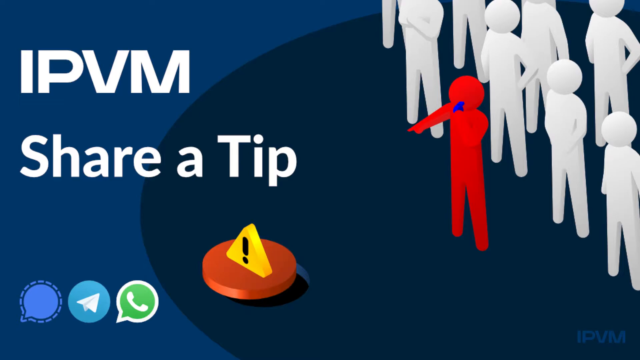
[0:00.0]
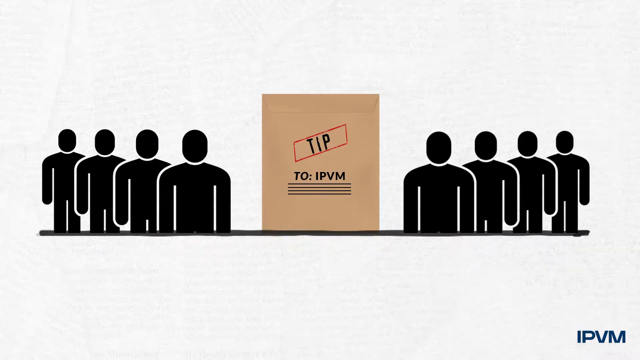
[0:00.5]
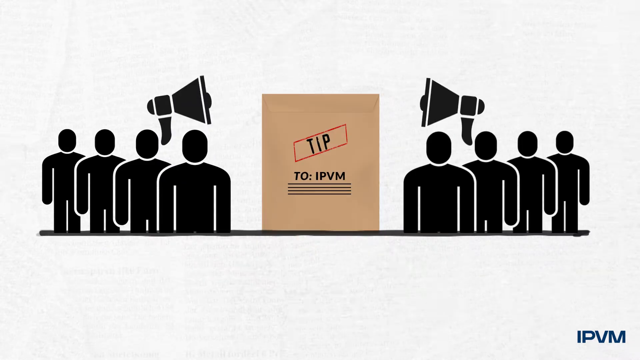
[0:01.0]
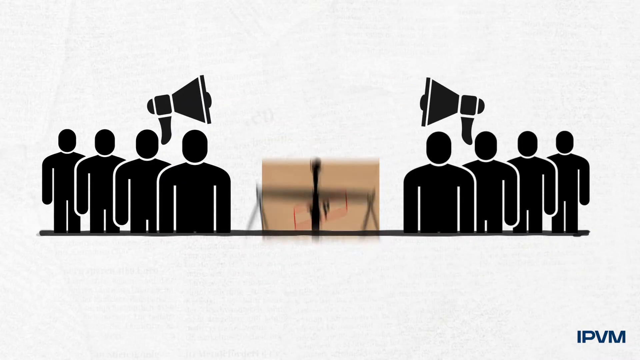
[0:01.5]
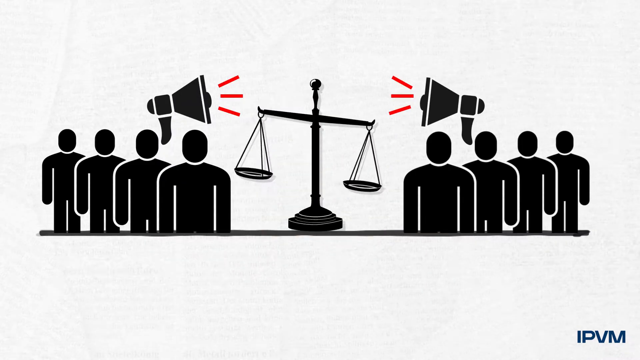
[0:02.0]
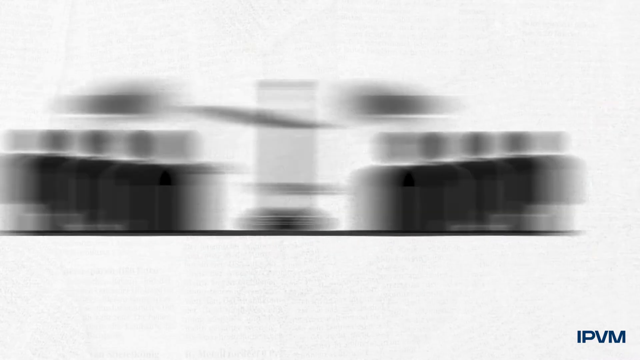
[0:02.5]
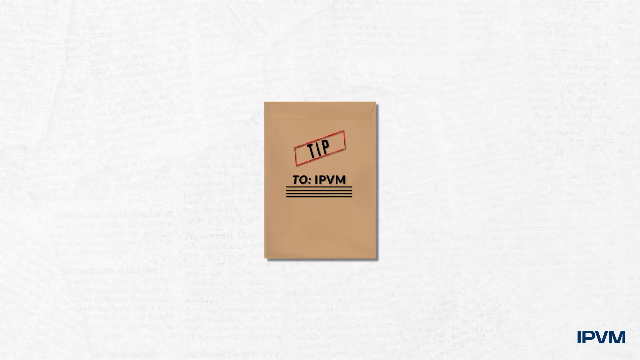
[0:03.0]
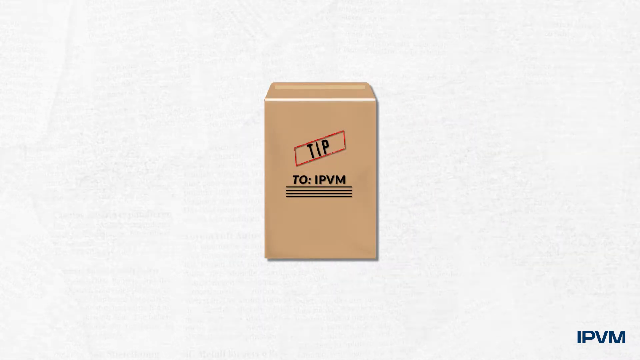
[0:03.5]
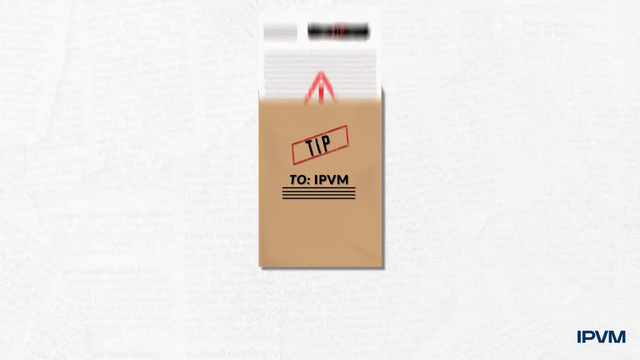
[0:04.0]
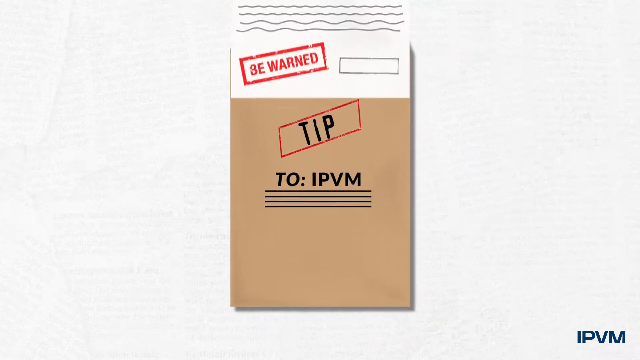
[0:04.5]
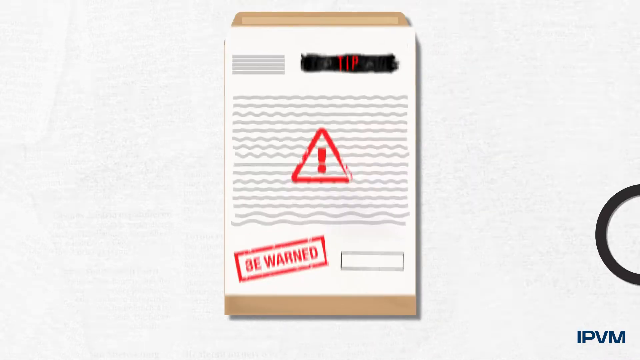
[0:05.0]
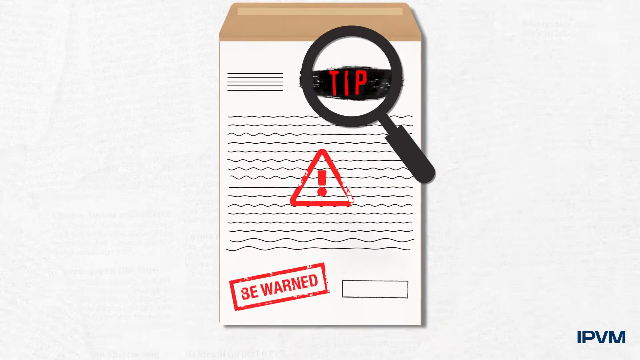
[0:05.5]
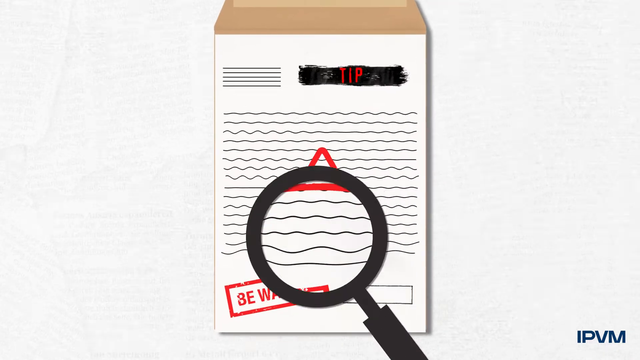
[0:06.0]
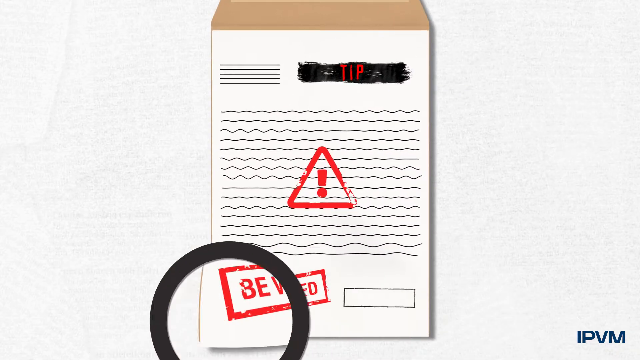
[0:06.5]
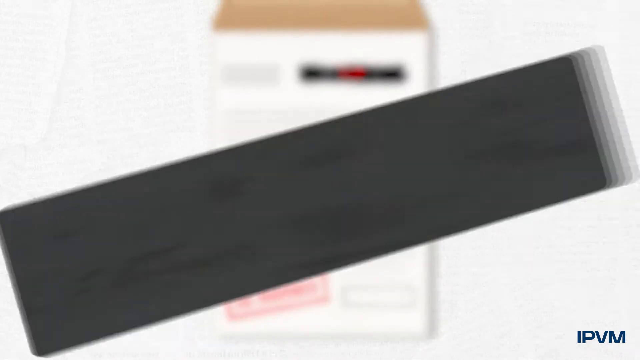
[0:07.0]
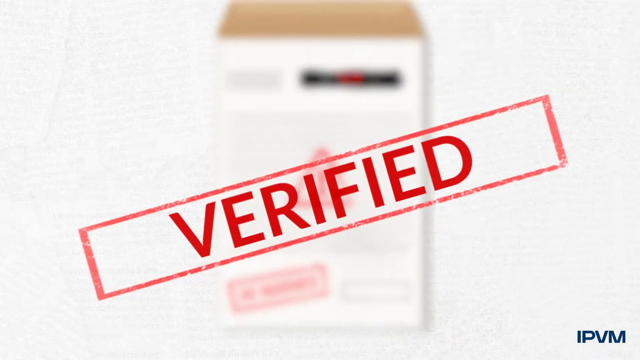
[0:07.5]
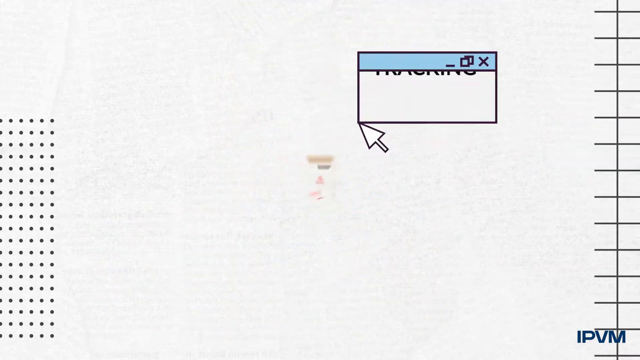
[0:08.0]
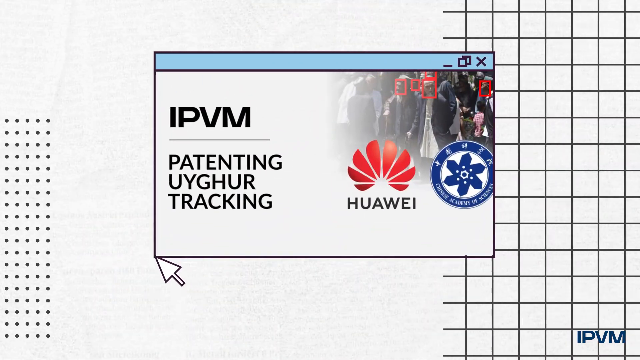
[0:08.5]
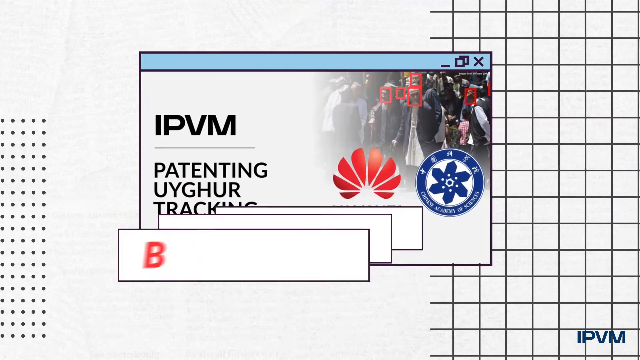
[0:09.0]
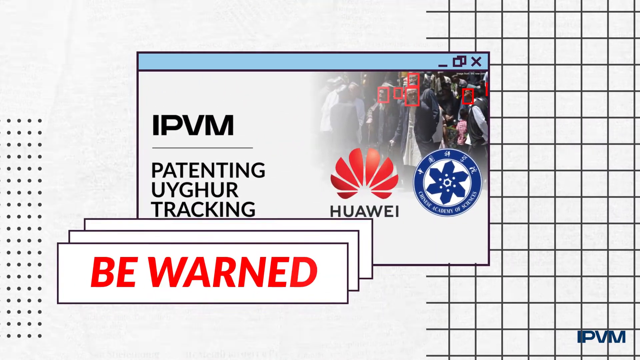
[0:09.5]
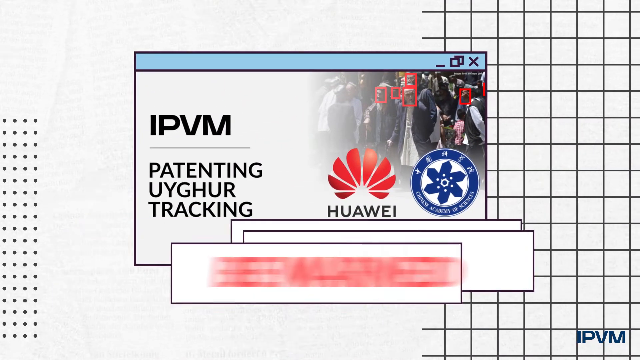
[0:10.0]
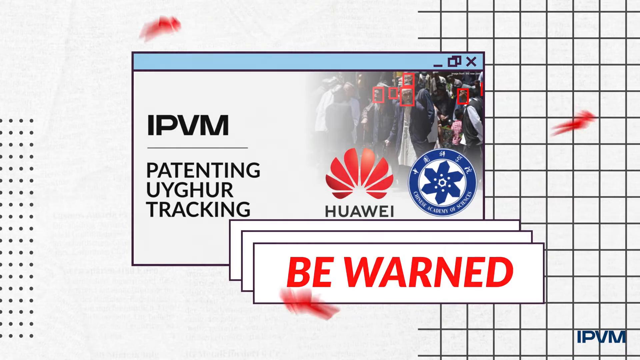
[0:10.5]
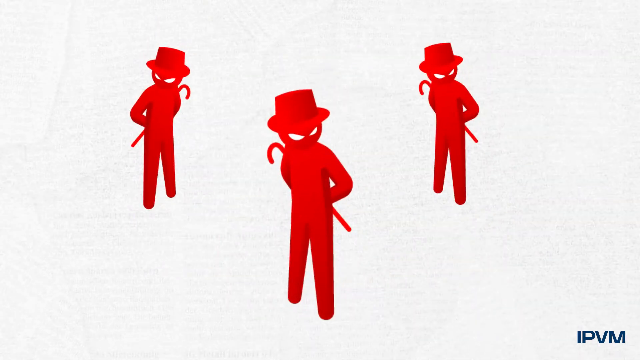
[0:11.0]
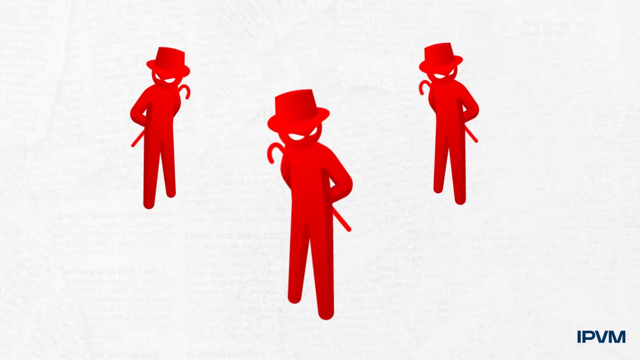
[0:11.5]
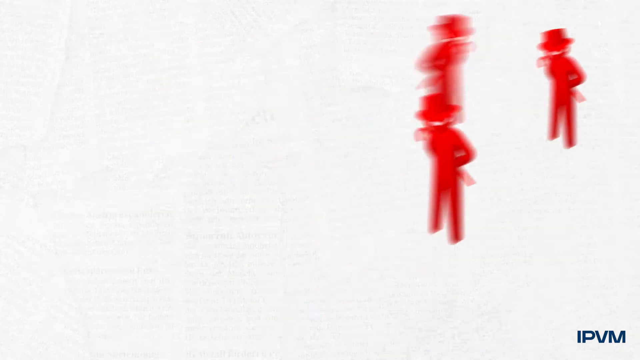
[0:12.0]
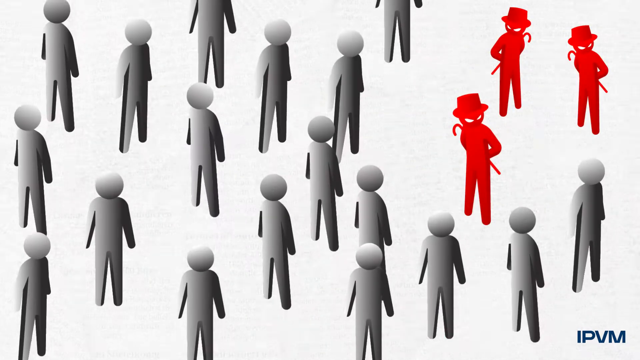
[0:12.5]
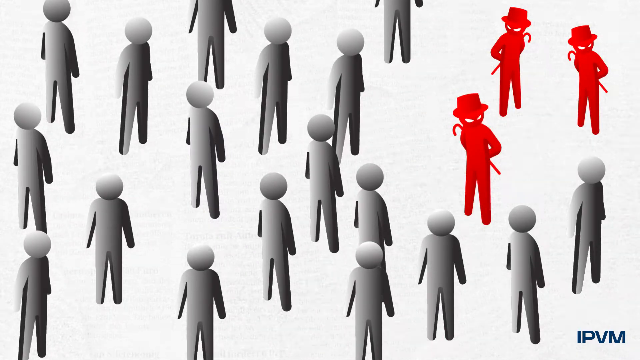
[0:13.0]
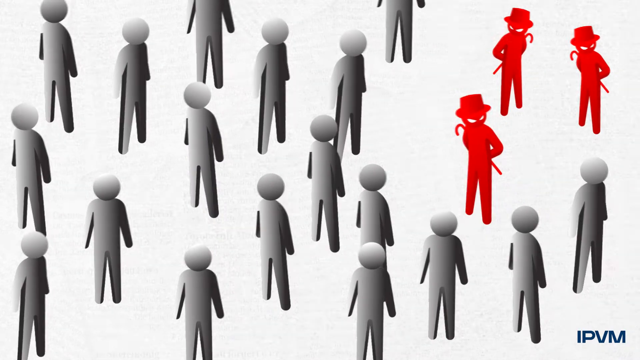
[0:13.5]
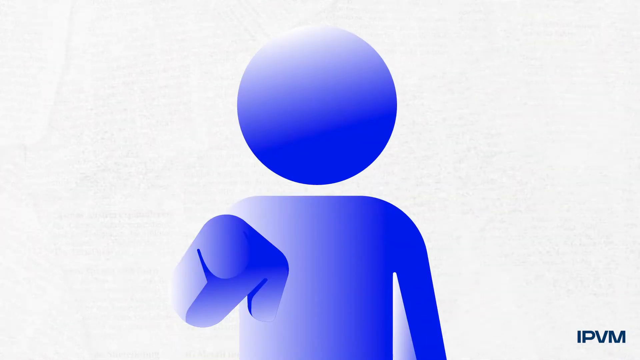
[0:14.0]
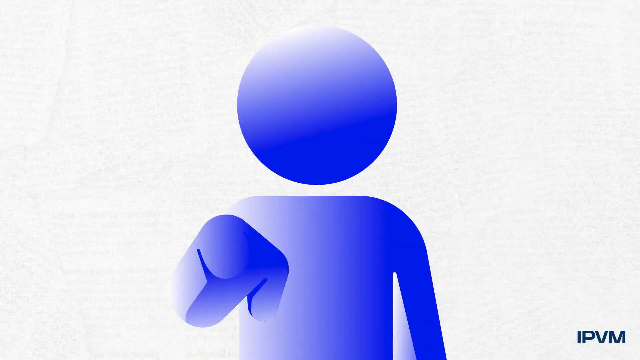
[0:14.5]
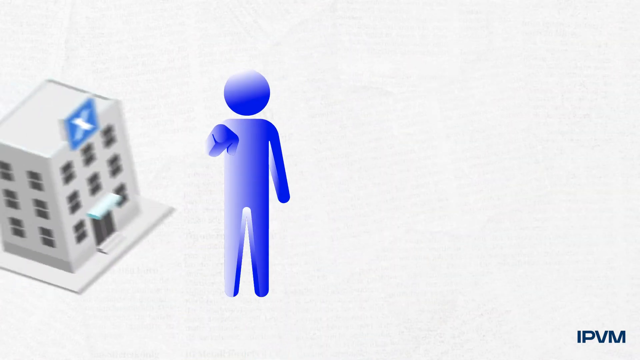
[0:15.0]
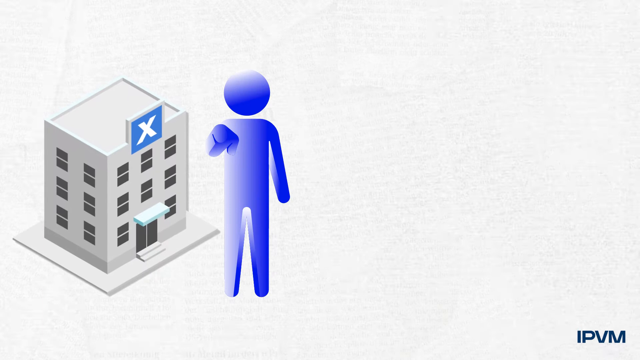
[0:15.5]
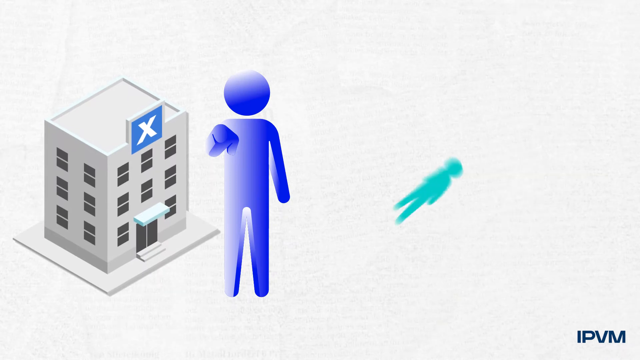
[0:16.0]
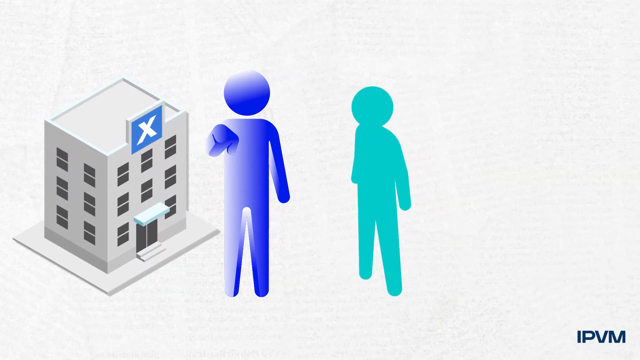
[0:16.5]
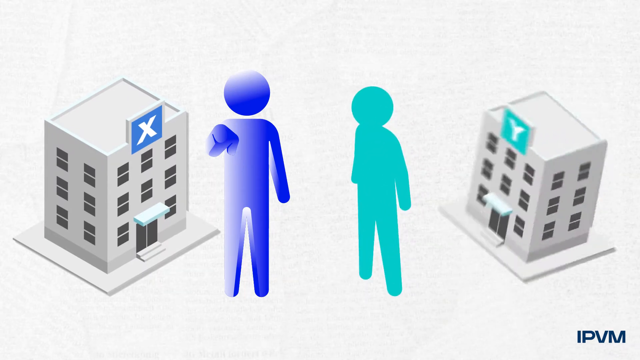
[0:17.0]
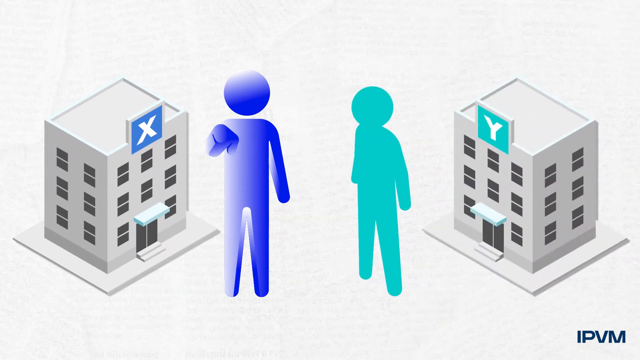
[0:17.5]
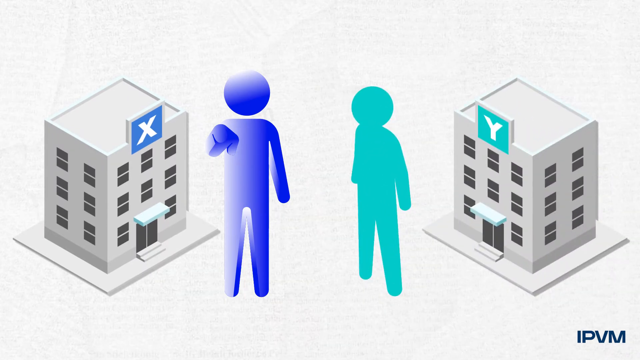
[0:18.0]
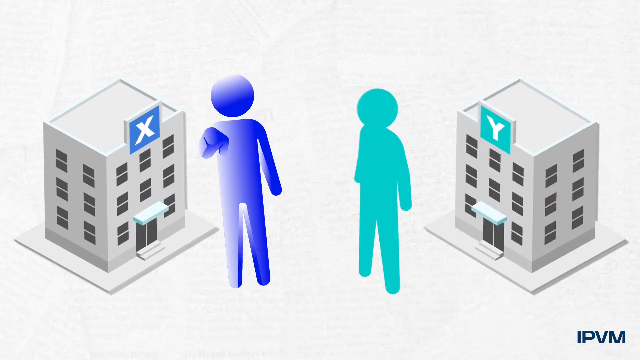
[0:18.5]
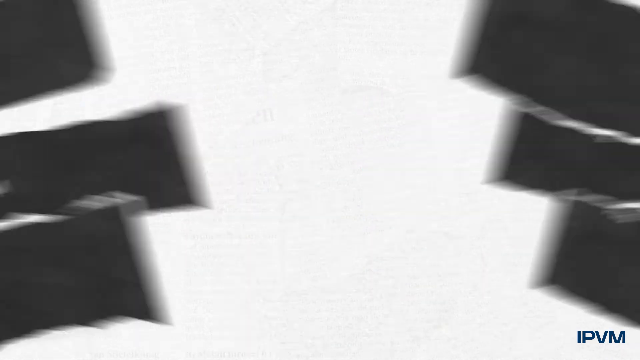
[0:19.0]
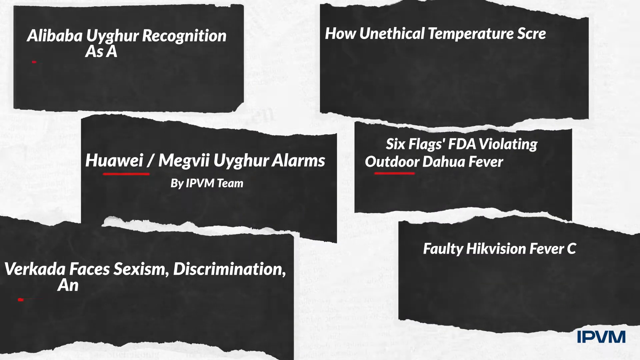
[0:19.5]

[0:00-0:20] An infographic opens with a scene reading "IPVM, share a tip," with stick figures in the top right, one red and the rest white, and a disclaimer icon in a yellow triangle. It cuts to black stick figures on the left and right sides, with a manila folder between them bearing the name "tip" and "to IPVM"; the "to IPVM" part is underlined four times. Two bull horns appear, one on each side, with red markings coming out of them. The scene cuts to some kind of ballot box with writing on it, a red exclamation point in a triangle in the middle, and a stamp that says "be warned." Lines represent text, and a huge "verified" stamp appears in the middle. A pop-up window appears with "IPVM" and boxes that say "be warned" in red. Three red stick figures with stovetop hats and canes behind them appear and are overtaken by larger gray stick figures without any identifying features. A medium-sized building with an X in the middle appears, with a blue stick figure pointing at the audience and a teal stick figure facing the blue one. Another office building pops up on the right side with a Y billboard in the middle.